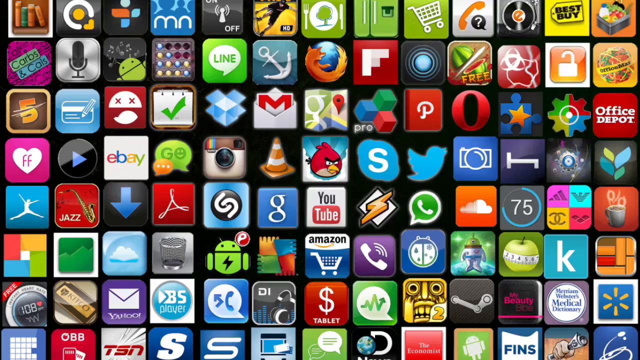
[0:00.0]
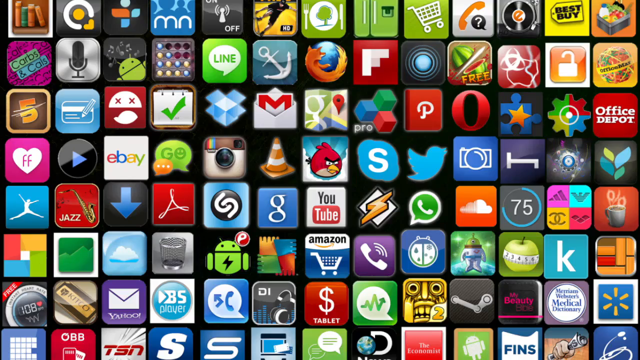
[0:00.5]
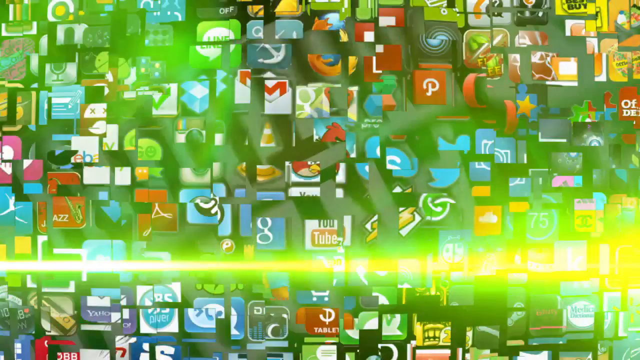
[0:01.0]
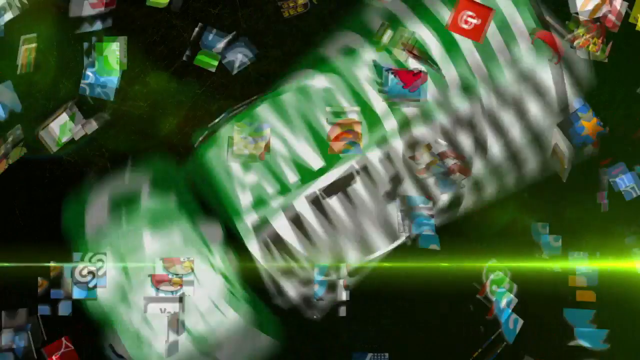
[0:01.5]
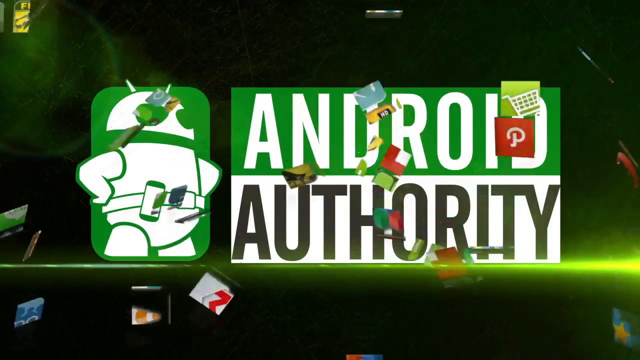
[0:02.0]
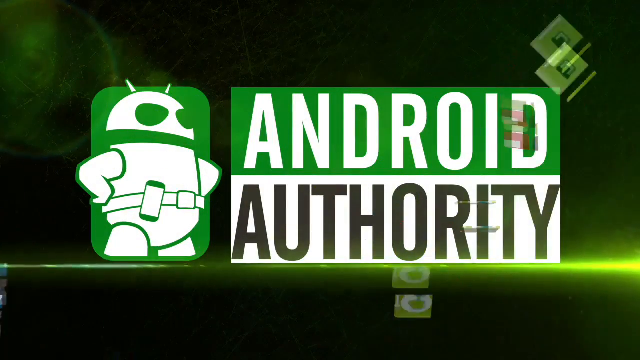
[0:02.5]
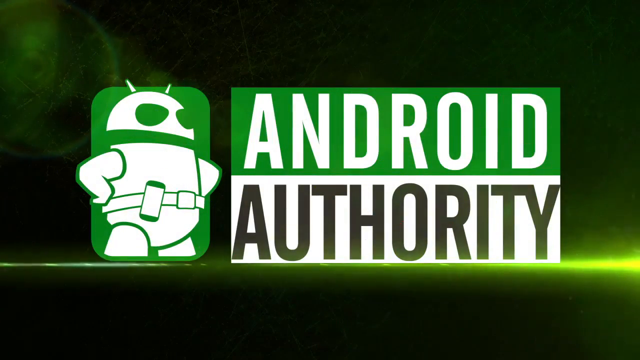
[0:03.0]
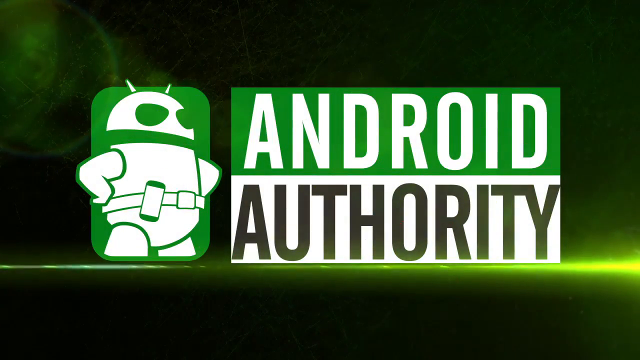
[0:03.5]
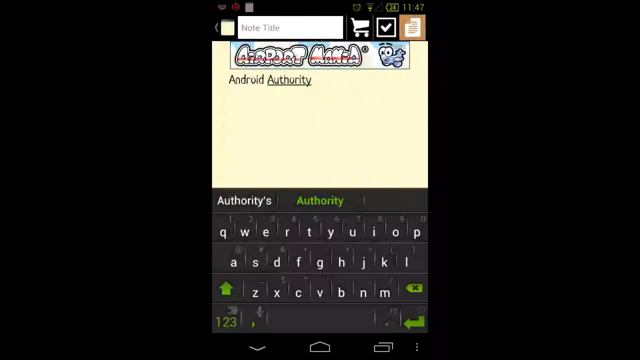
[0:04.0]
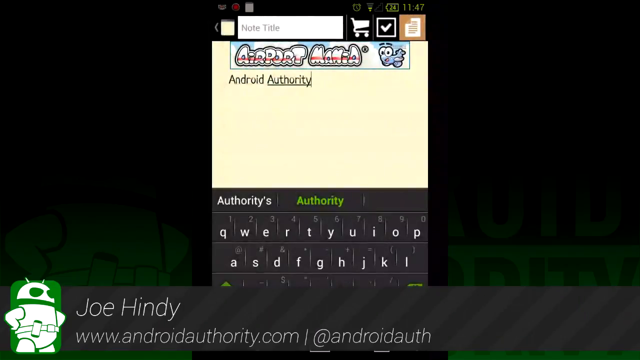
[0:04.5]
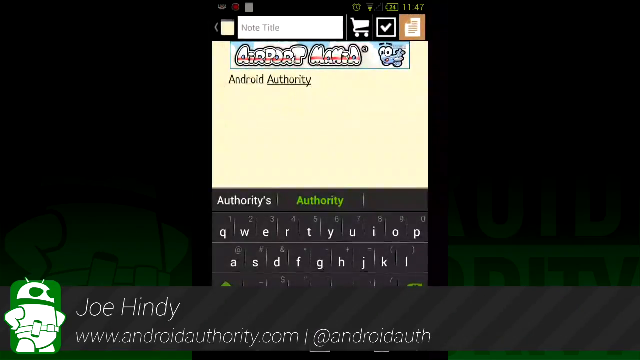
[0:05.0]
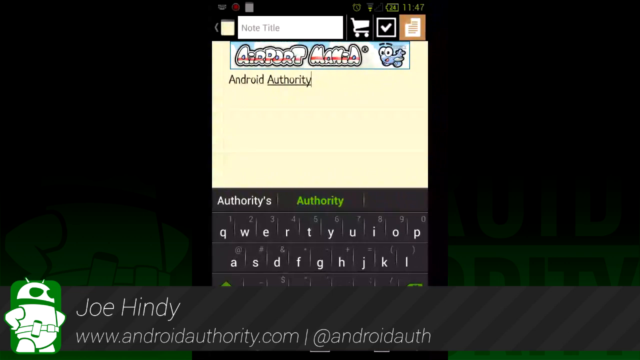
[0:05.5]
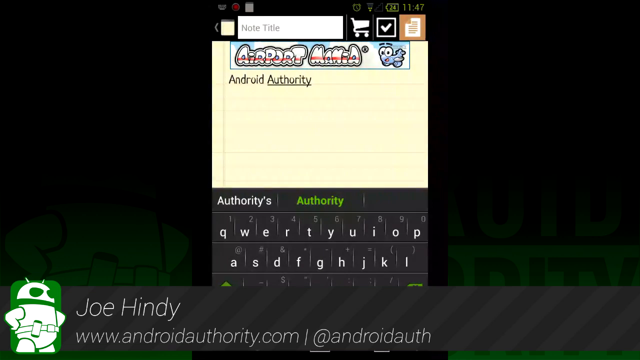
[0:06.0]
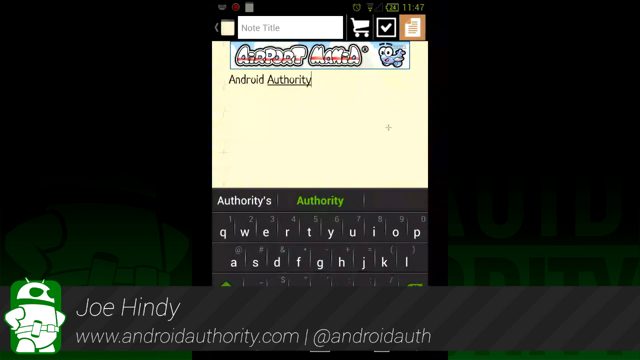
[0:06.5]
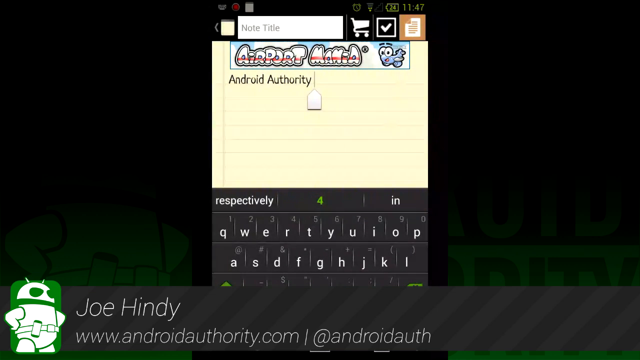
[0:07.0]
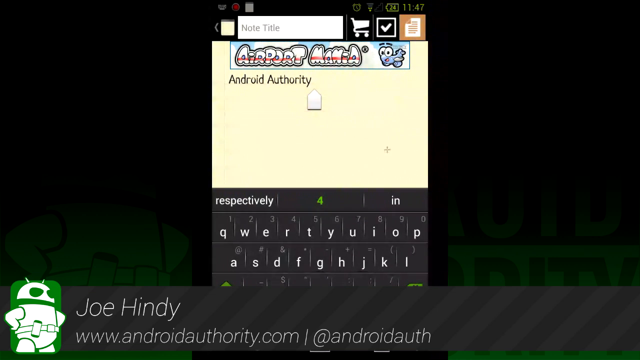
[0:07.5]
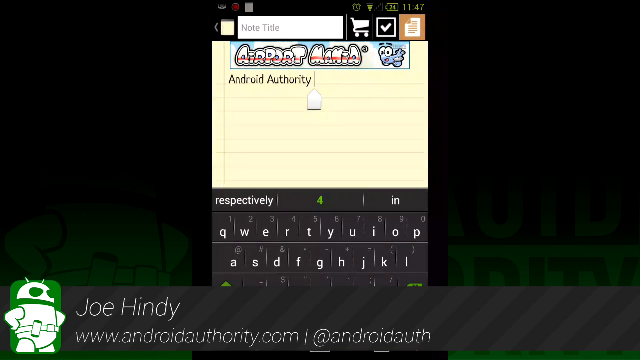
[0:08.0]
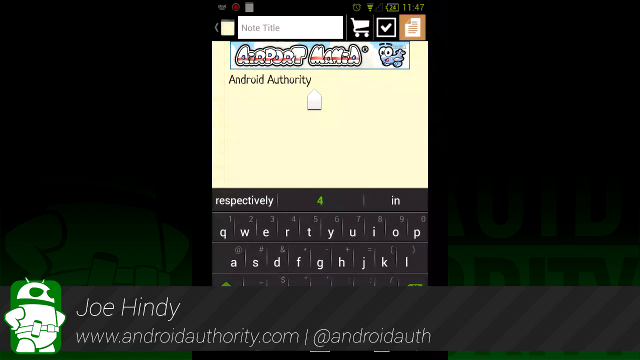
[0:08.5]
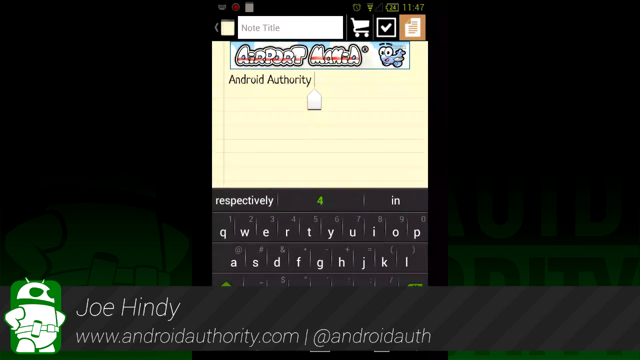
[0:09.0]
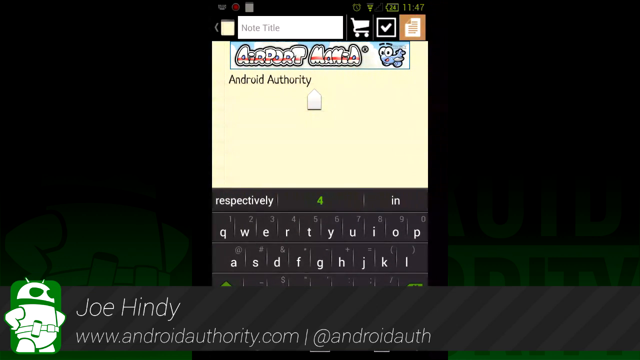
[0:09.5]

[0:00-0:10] The video opens on a collection of app icons. Among those that can be recognised are YouTube, Google, Adobe, eBay, a white shopping cart, Office Depot, and possibly one with a sign that looks like a Chanel and an Adidas symbol. One icon has a white heart on a purple background and says "FF". A Best Buy icon is on the bottom, the last one in the right-hand corner, and there is also Walmart. Text reads "Android Authority", and "Joe Hindi" appears in the lower left-hand corner. There is an Android image whose character looks almost like a superhero.